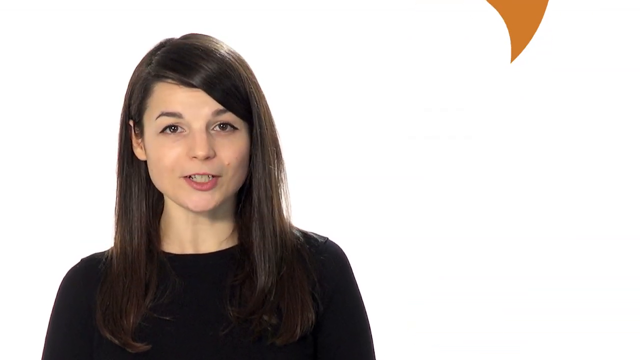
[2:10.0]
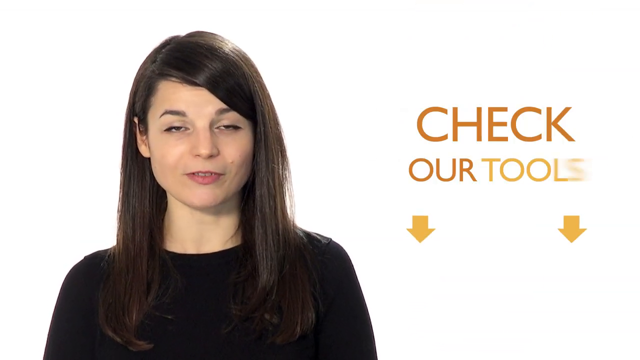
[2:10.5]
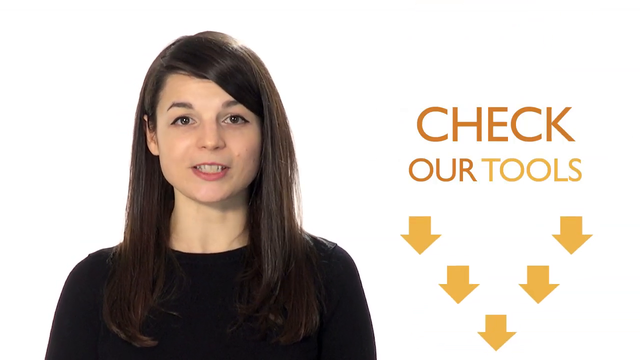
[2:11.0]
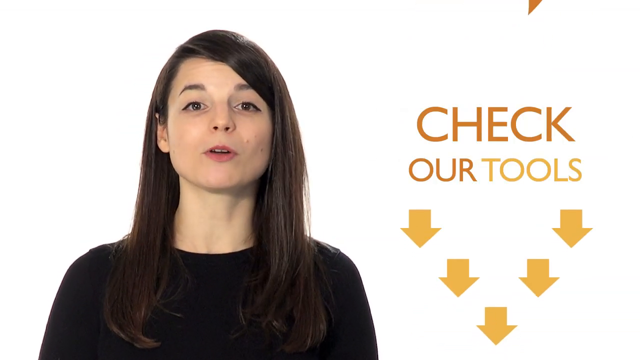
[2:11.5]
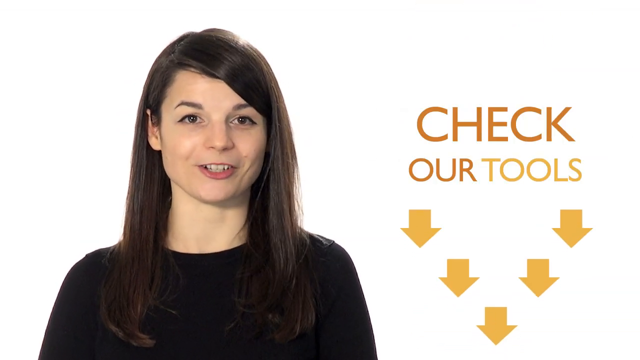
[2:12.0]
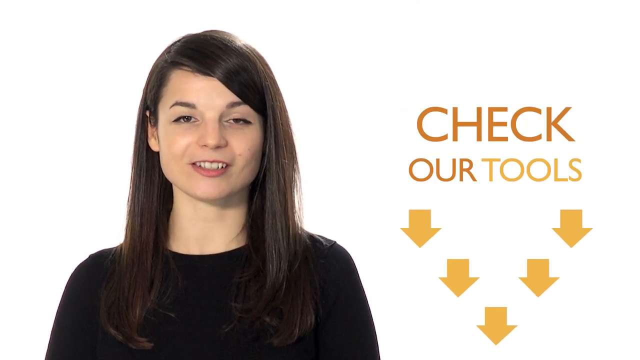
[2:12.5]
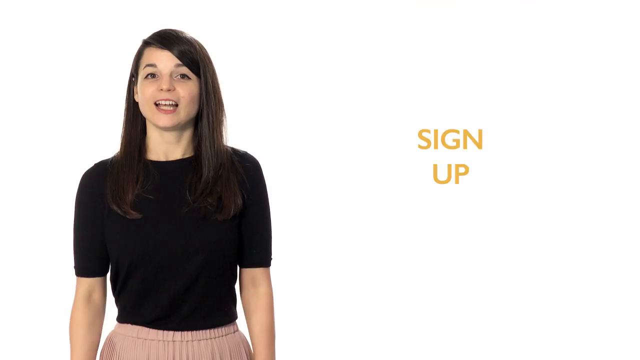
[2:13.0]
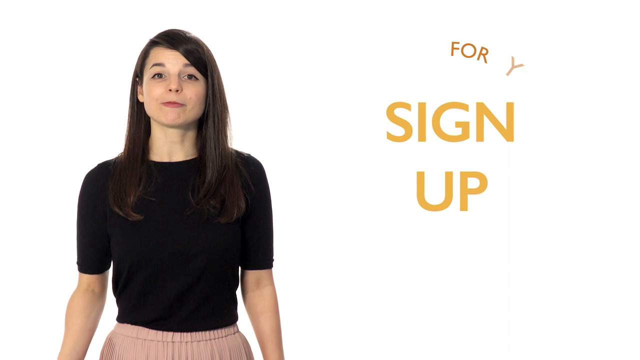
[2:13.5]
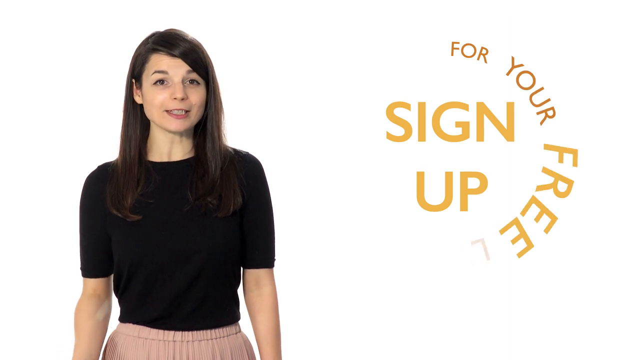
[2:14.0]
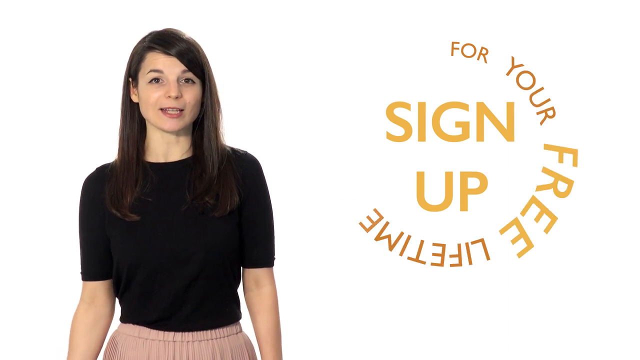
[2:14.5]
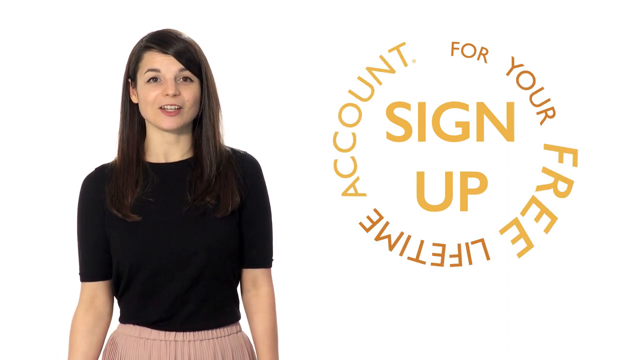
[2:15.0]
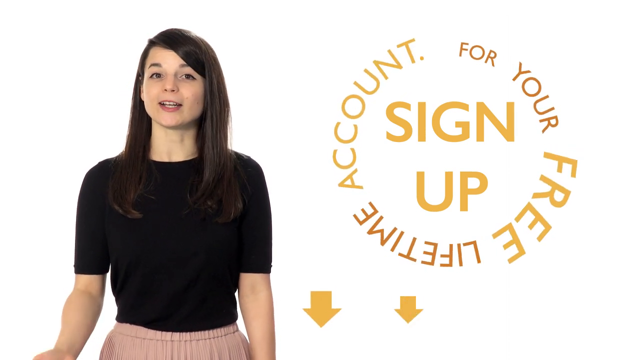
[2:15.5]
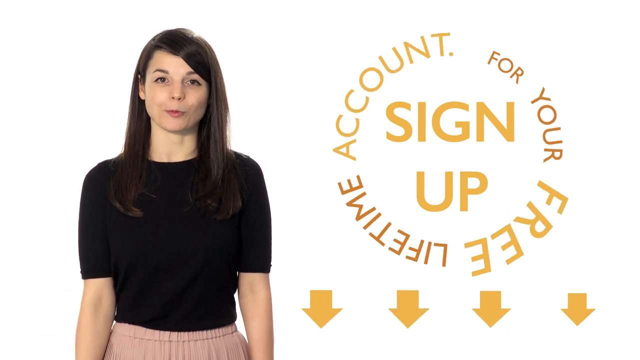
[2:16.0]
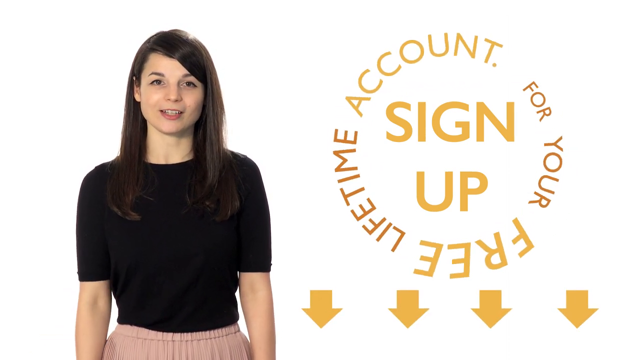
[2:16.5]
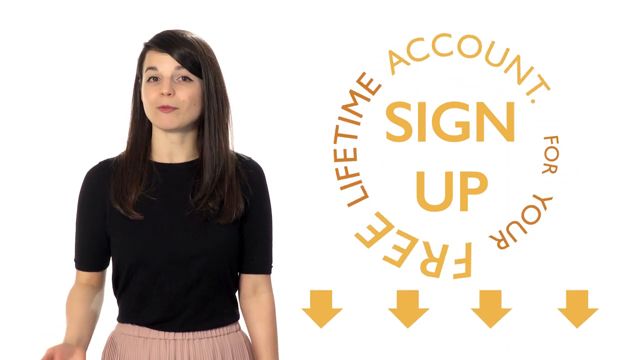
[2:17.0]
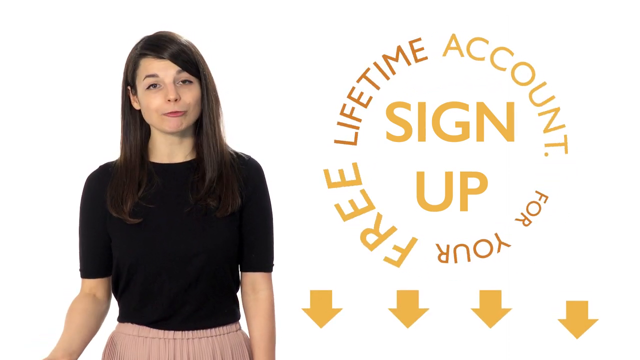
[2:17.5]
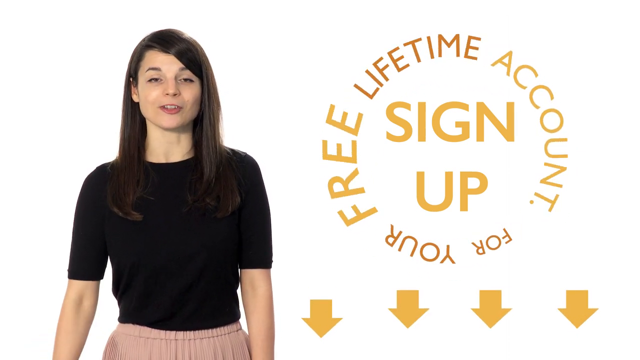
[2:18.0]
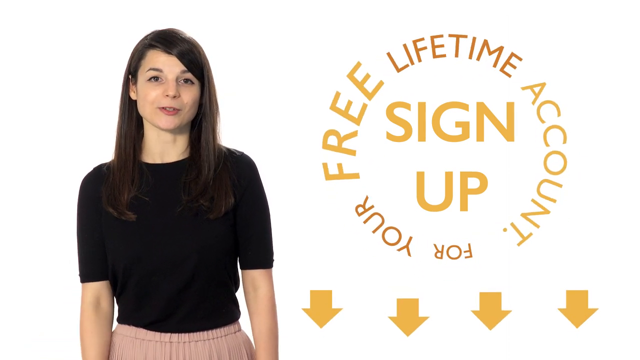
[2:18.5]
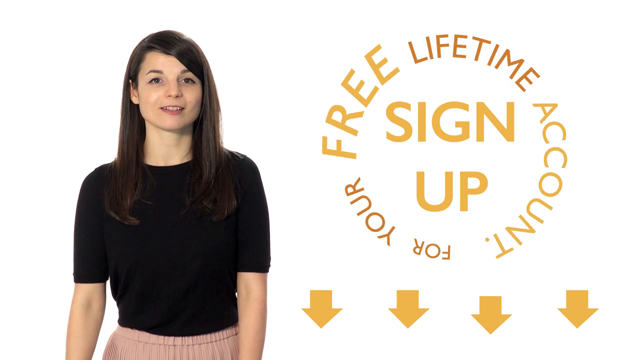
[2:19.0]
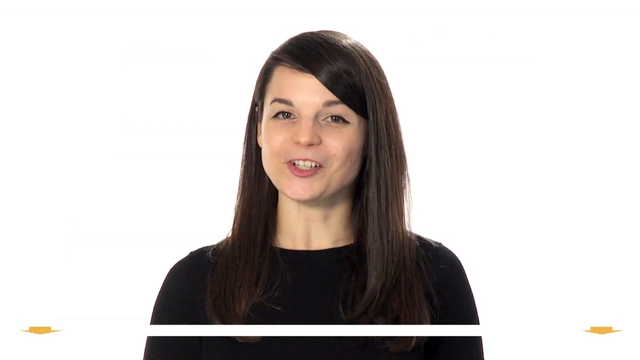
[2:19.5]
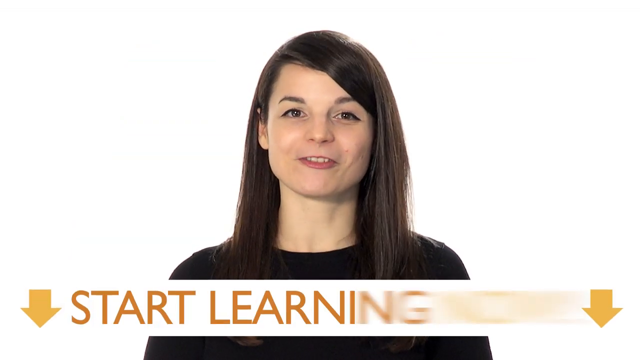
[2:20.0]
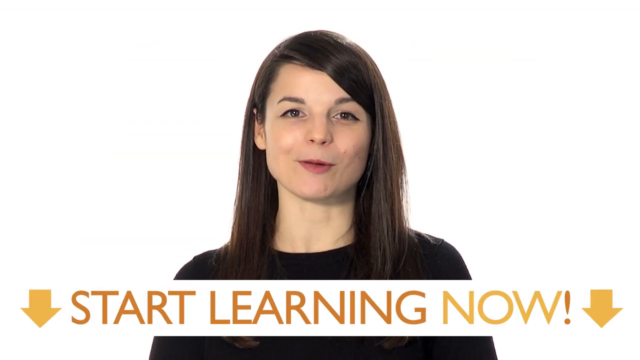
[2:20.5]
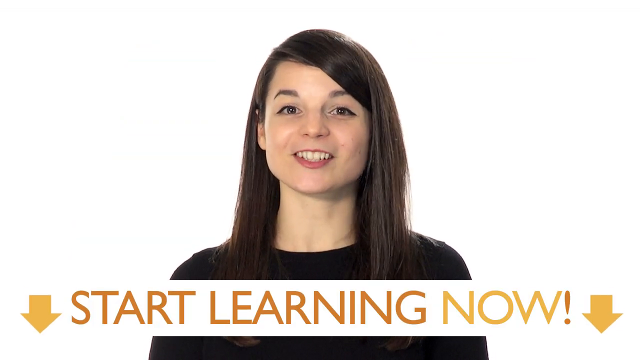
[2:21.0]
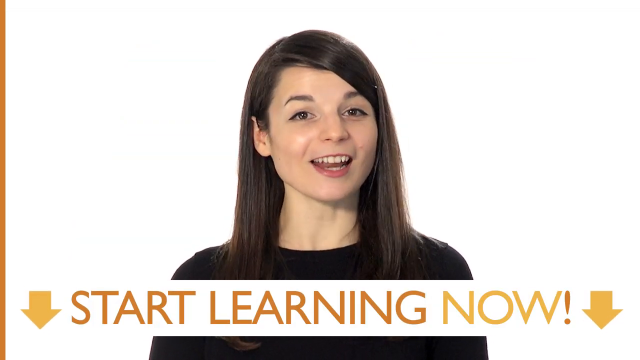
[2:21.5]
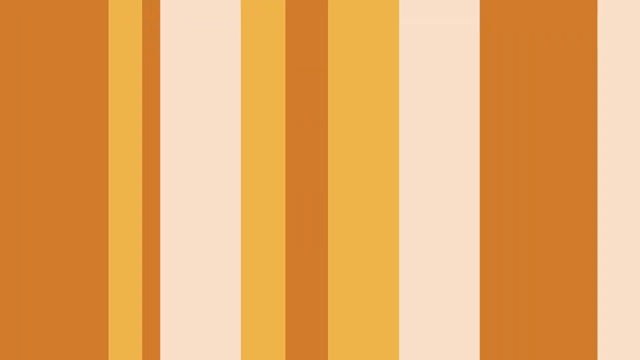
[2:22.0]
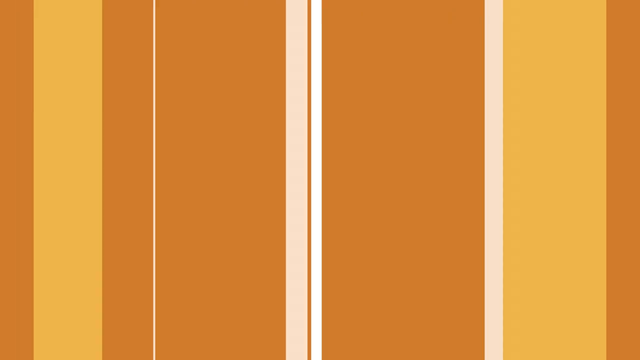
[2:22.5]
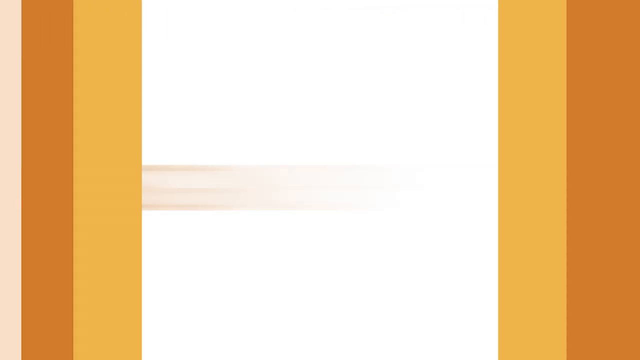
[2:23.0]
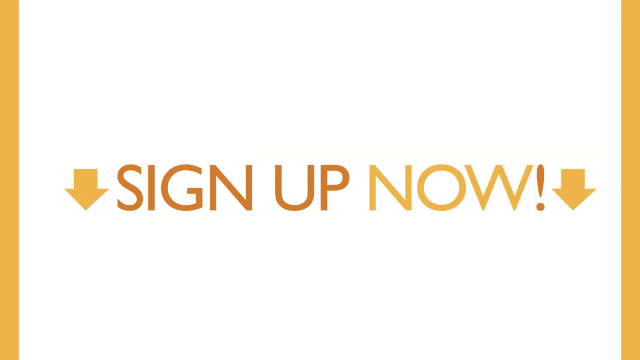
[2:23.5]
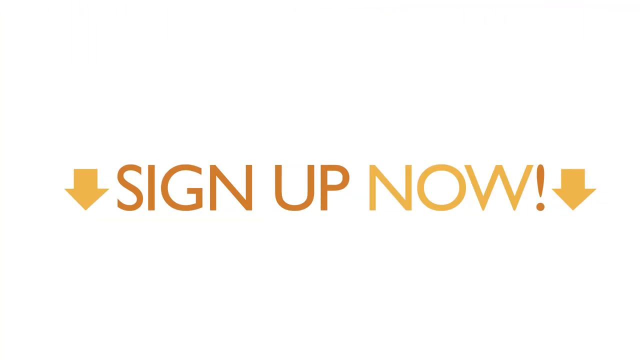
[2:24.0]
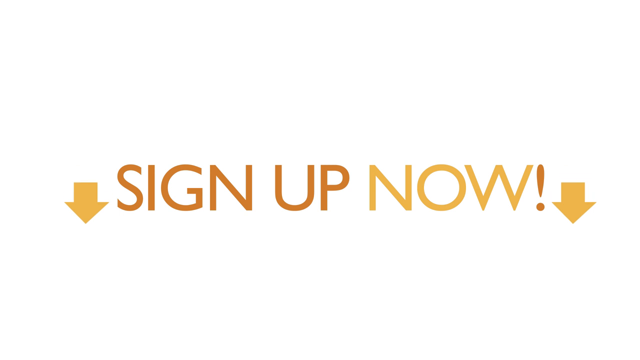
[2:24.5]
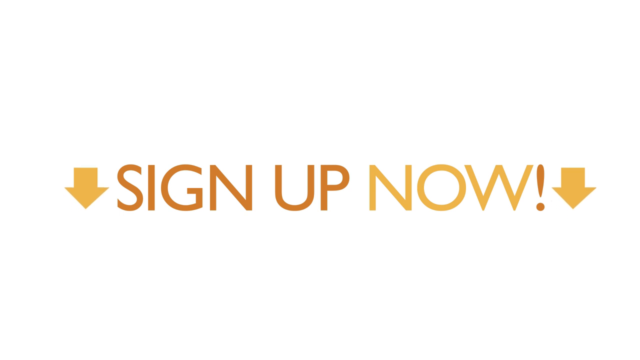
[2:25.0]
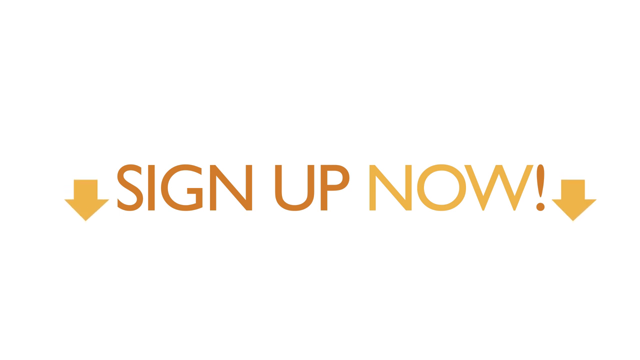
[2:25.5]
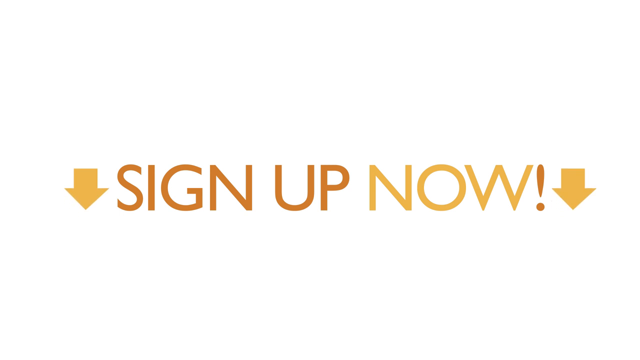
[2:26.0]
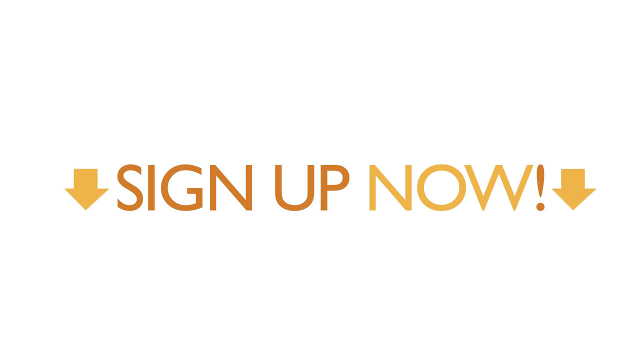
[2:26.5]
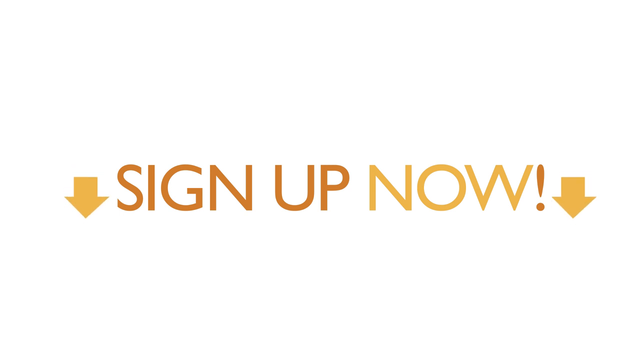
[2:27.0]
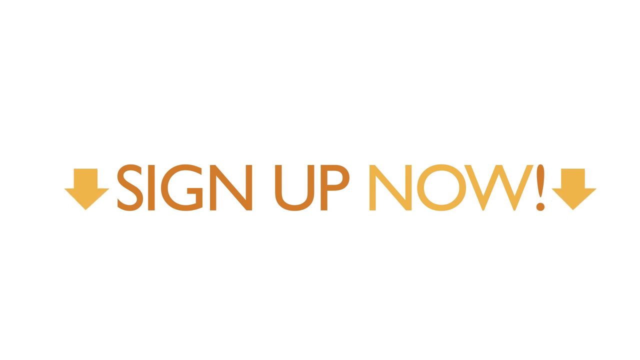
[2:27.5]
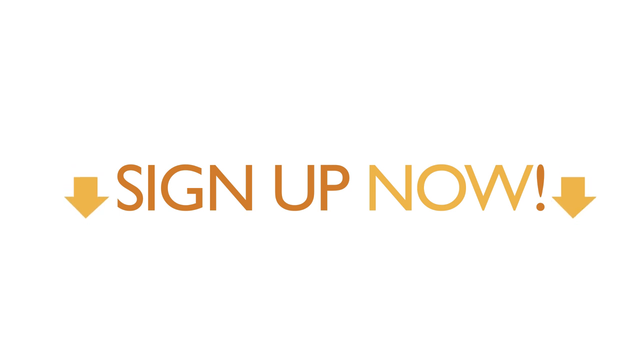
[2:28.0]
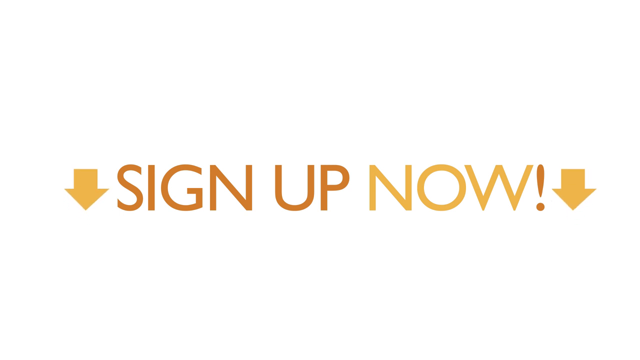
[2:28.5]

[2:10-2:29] As the rocket passes by her, the words "check our tools" appear in orange with five arrows underneath pointing downward in a pyramid-like shape. These disappear, and the screen returns to the white background with the woman standing on the left. On the right, orange letters reading "sign up" appear, followed by the words "for your free lifetime account" in a circle around "sign up," and four arrows appear in a line at the bottom pointing downward. The screen cuts to a close-up of her speaking in the middle of the white screen, and a bar at the bottom reads "start learning now" with two downward-pointing arrows on each side. Orange lines then sweep across the screen, transitioning to a white screen with the words "sign up now" in the middle and two downward-pointing arrows on each side. This stays on screen until the end of the video.